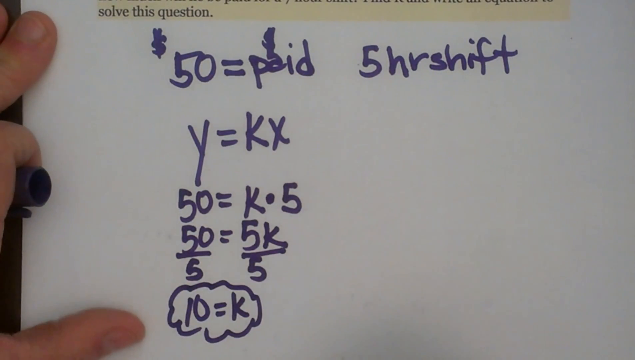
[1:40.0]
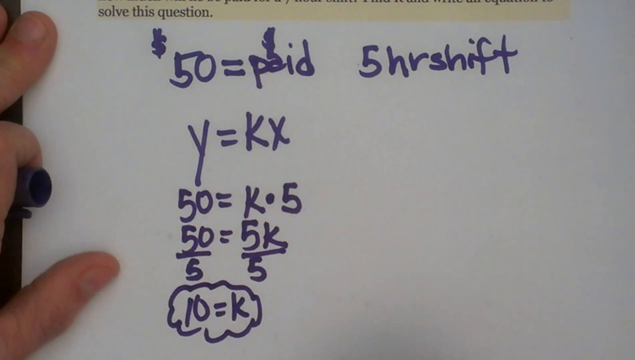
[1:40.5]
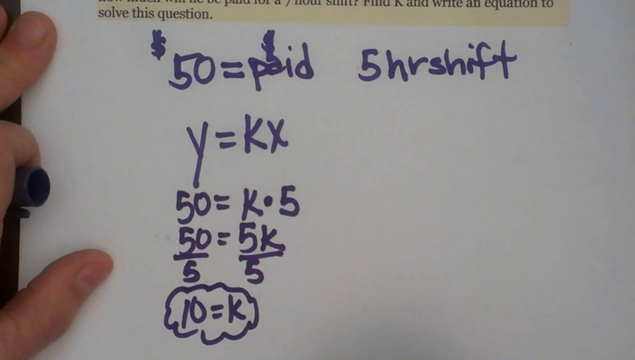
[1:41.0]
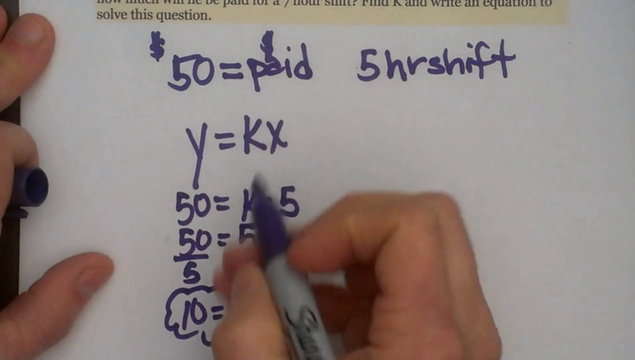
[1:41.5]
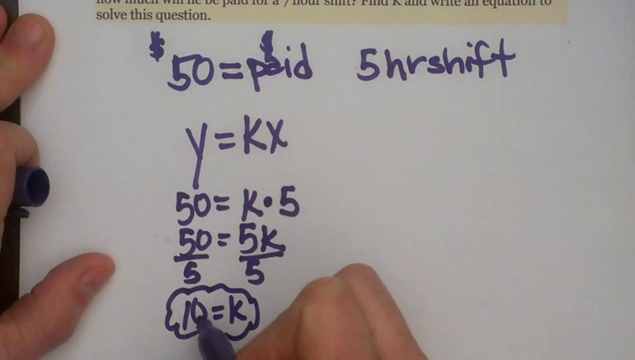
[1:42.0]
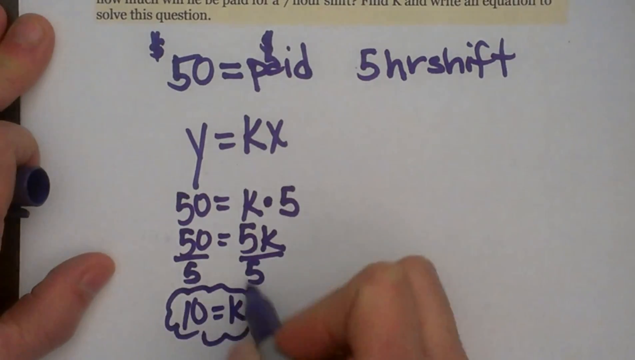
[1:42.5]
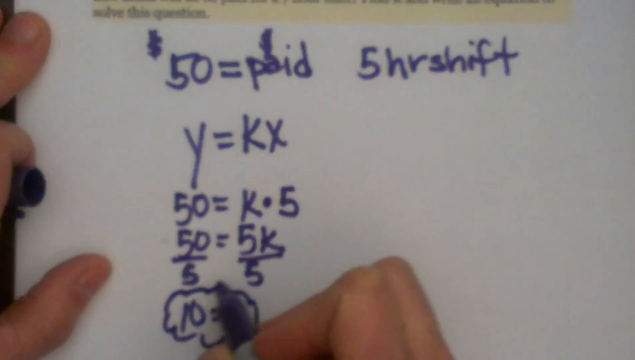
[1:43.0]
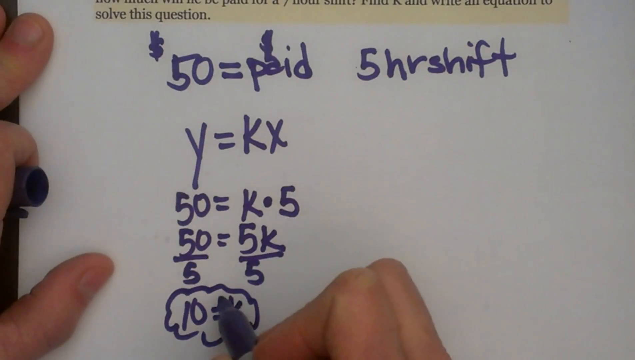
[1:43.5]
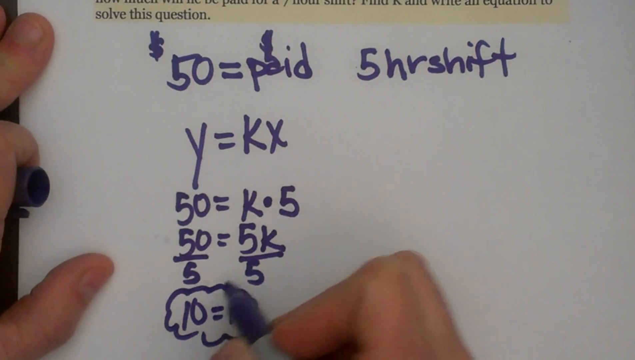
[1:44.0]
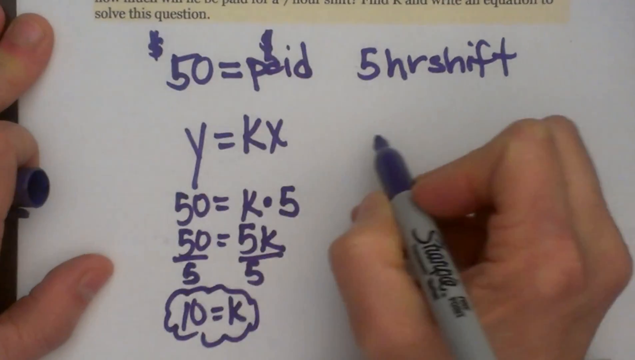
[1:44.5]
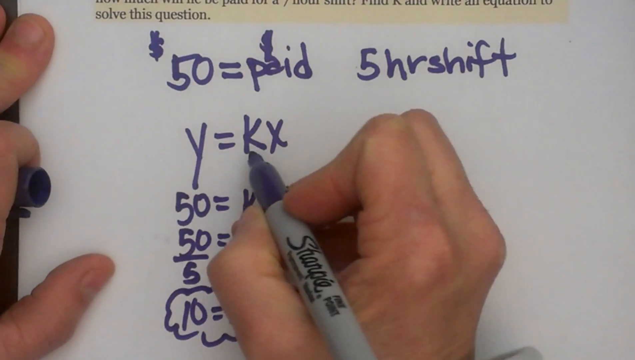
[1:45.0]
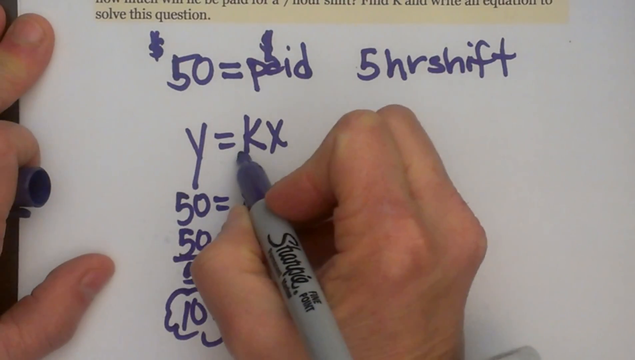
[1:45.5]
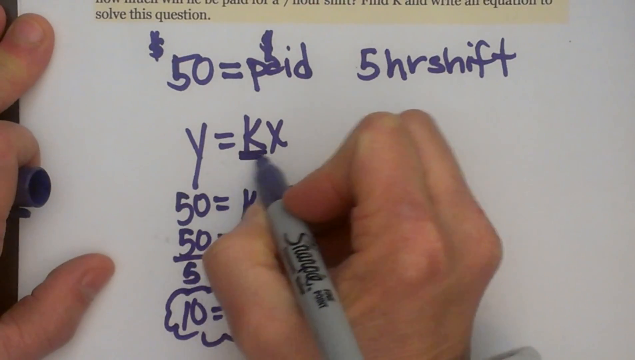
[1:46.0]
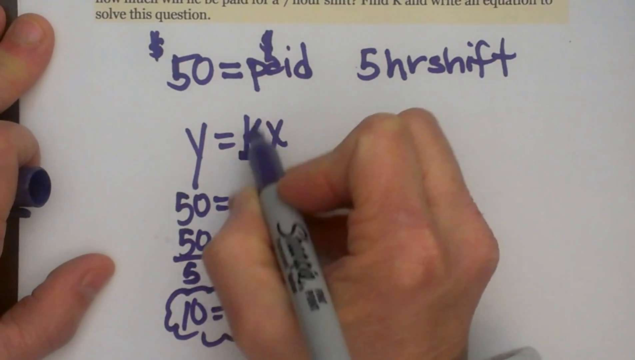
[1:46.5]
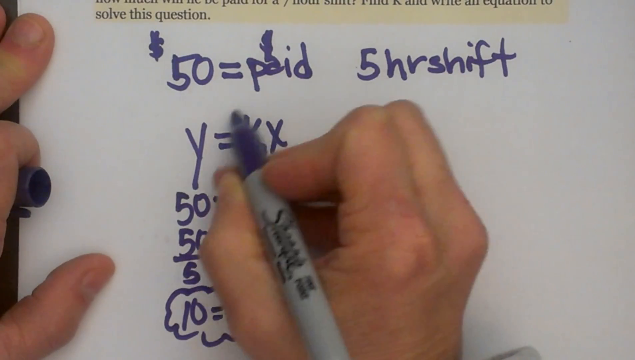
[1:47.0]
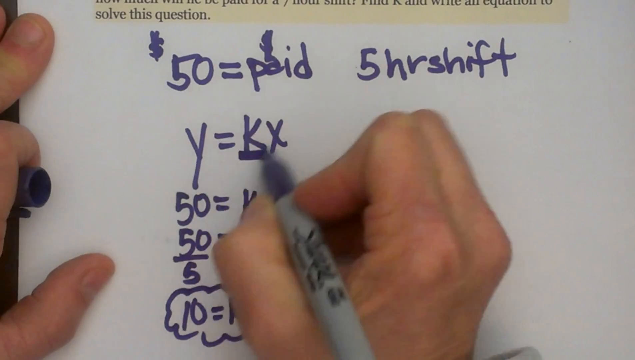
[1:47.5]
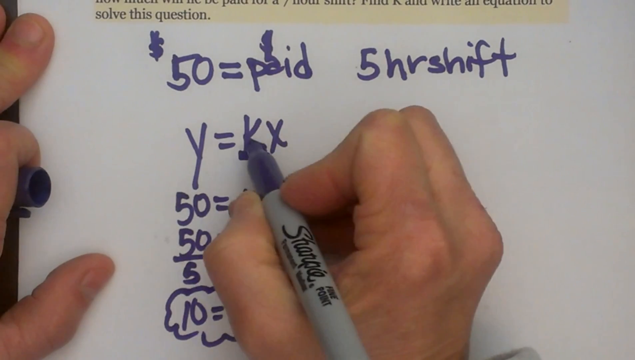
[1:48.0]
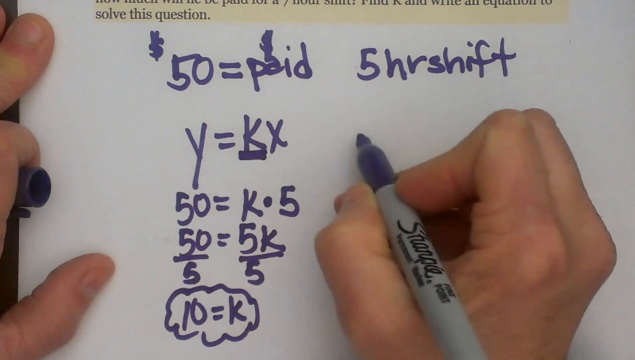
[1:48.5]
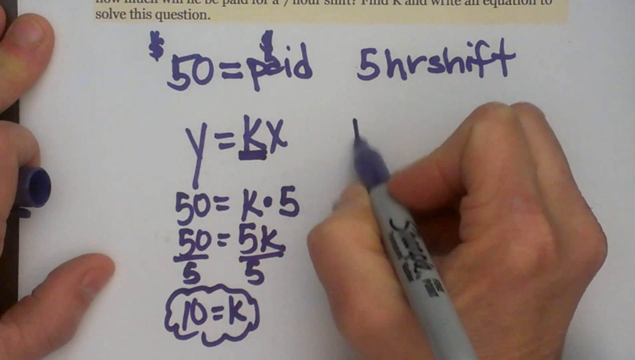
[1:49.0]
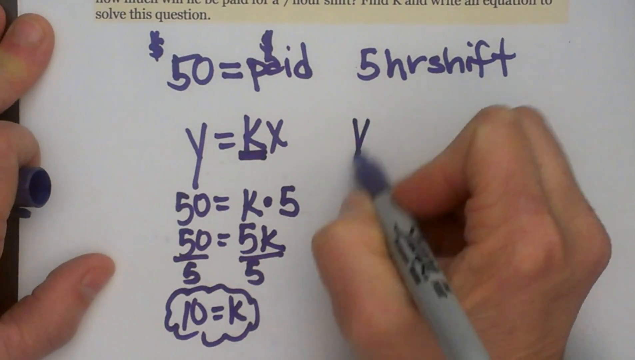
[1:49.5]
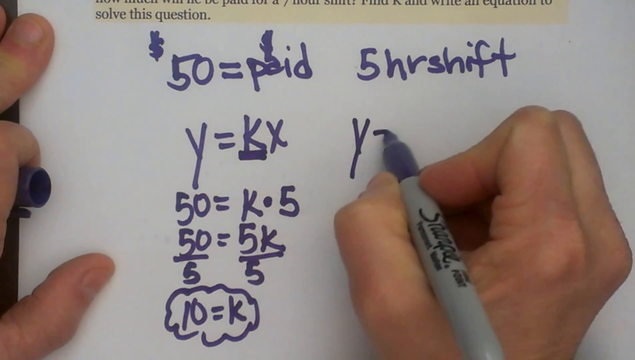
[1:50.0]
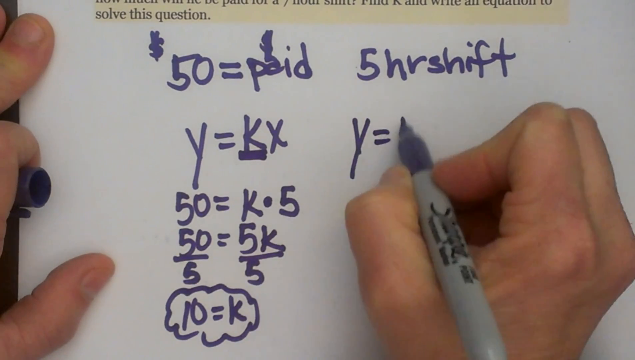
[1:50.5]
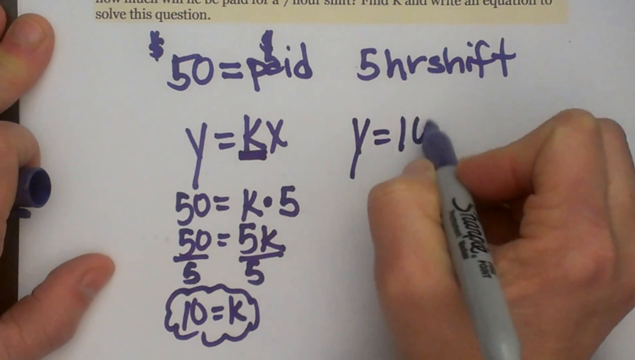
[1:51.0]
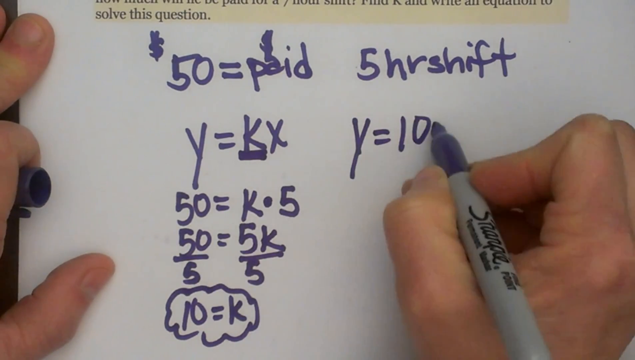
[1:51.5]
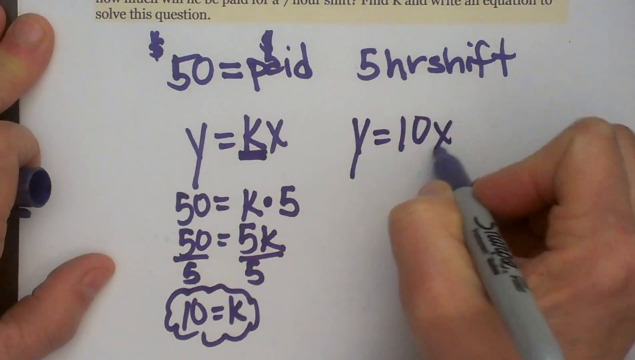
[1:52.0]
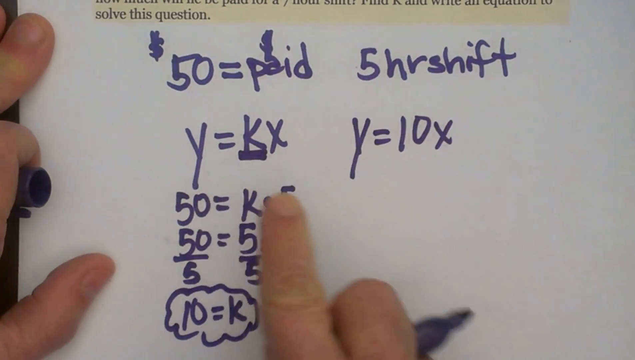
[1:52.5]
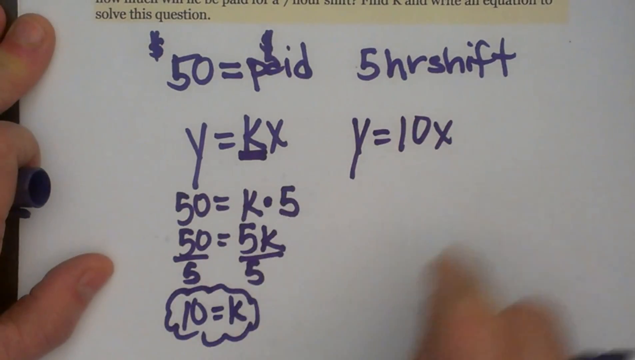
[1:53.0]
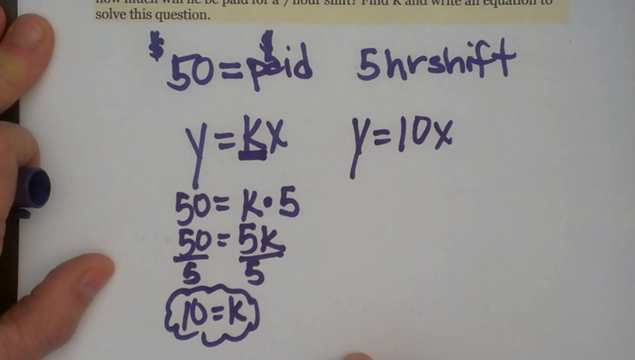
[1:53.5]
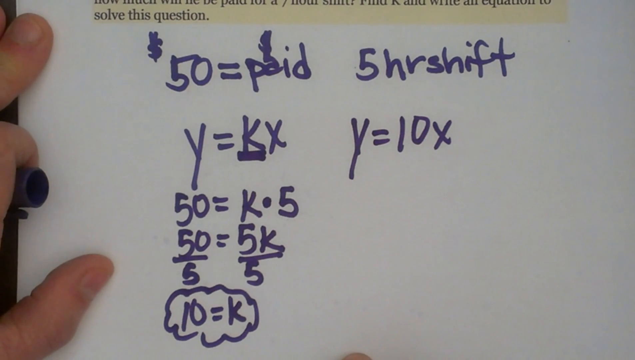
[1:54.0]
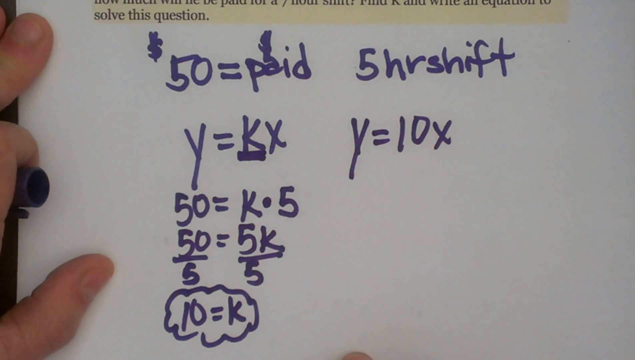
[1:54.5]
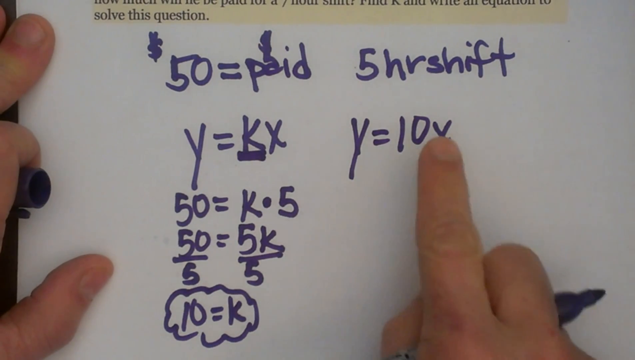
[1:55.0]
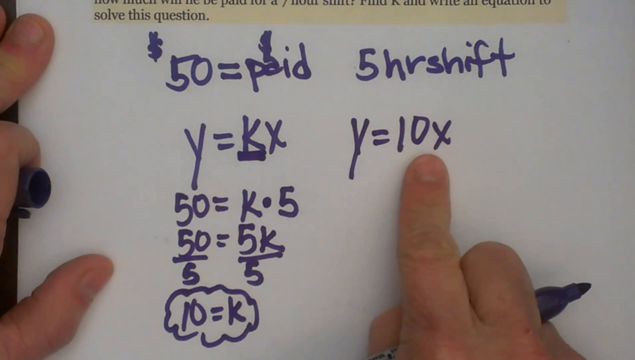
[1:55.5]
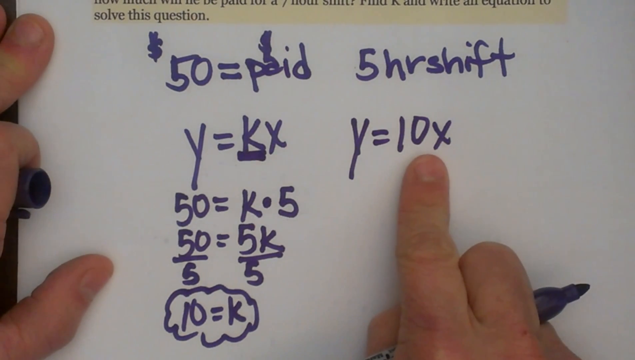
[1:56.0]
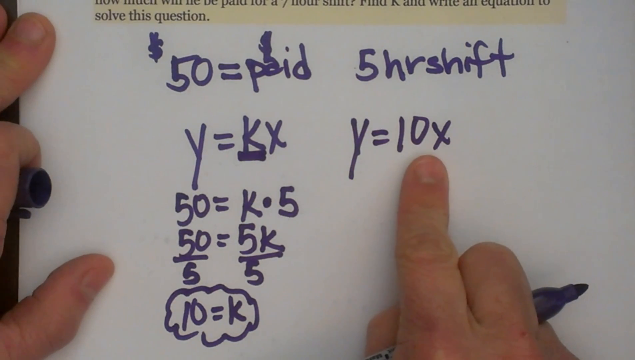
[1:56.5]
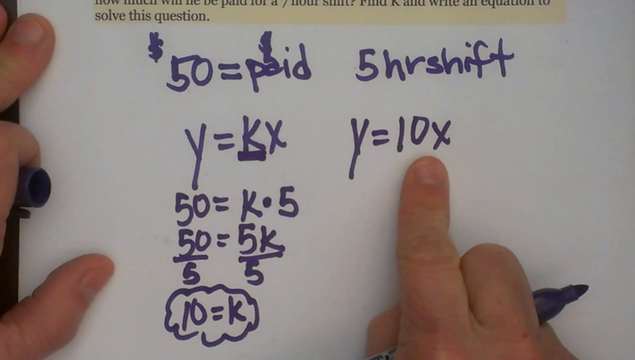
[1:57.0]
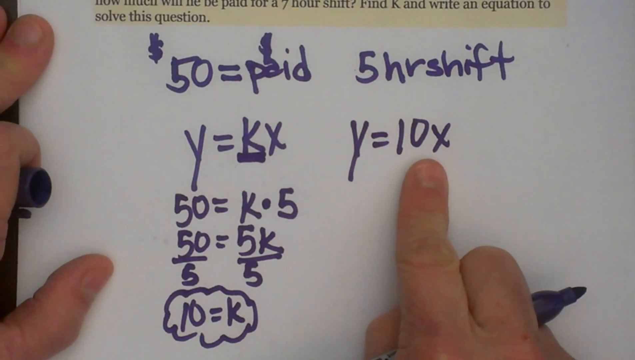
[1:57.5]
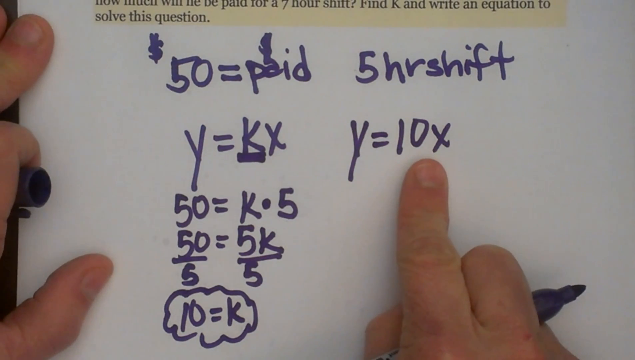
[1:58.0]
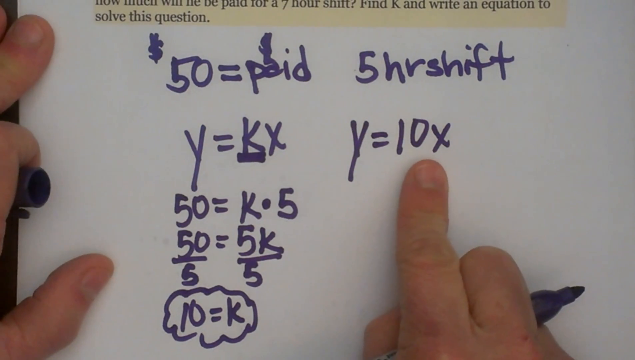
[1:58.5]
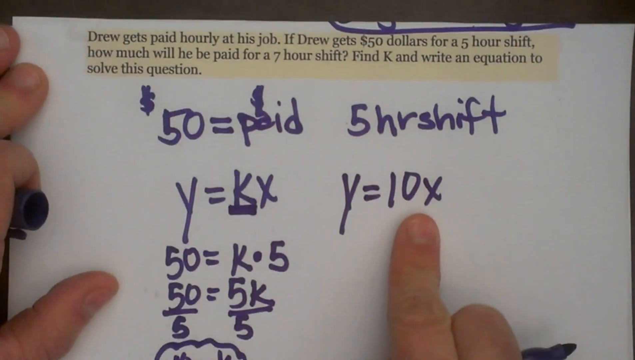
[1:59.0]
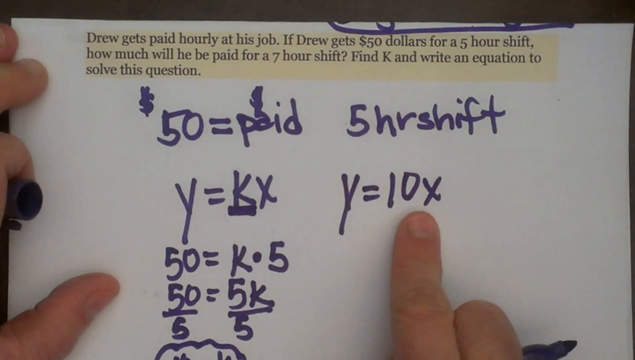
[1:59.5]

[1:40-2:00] A person holds down a piece of paper with the left hand; before writing anything with the Sharpie, they use the left hand to adjust and straighten the paper. Equations have already been written with the Sharpie marker in the right hand, and the person adds to them. "10 = K" is circled with a very bumpy line, and the Sharpie kind of goes around the top of it. The person underlines the K and writes "Y = 10X", then holds the index finger under the 10X. They push the paper down, sliding it so more of the question at the top is visible, and then the paper settles back so only the part that says "solve this question" shows.